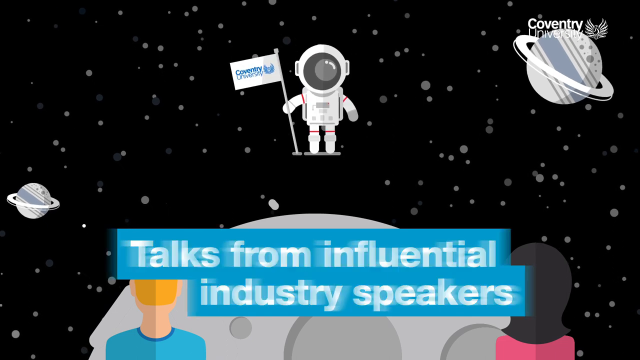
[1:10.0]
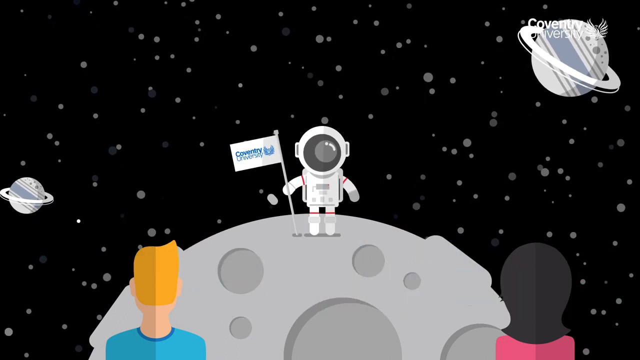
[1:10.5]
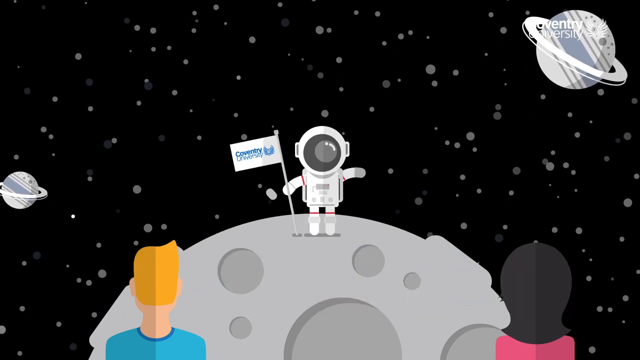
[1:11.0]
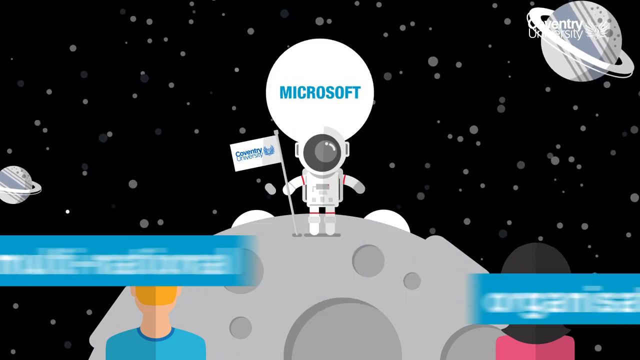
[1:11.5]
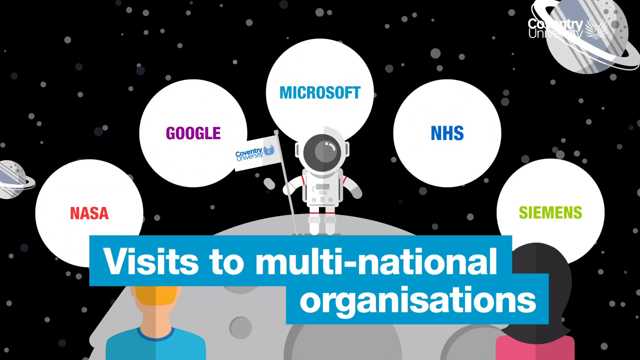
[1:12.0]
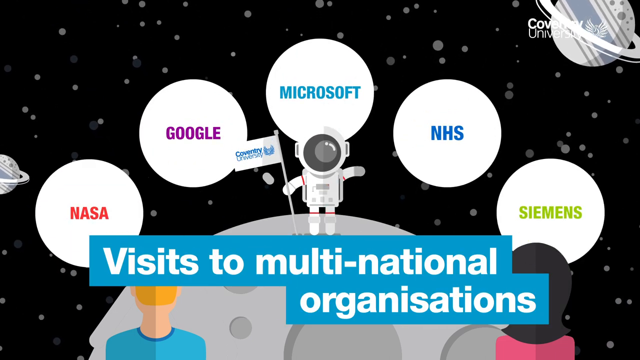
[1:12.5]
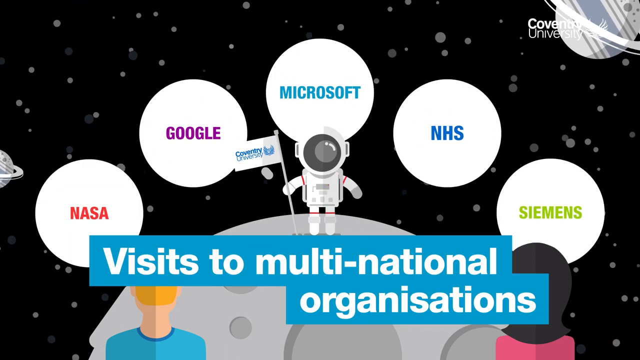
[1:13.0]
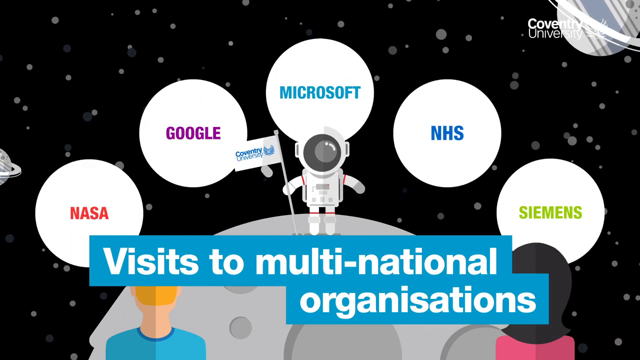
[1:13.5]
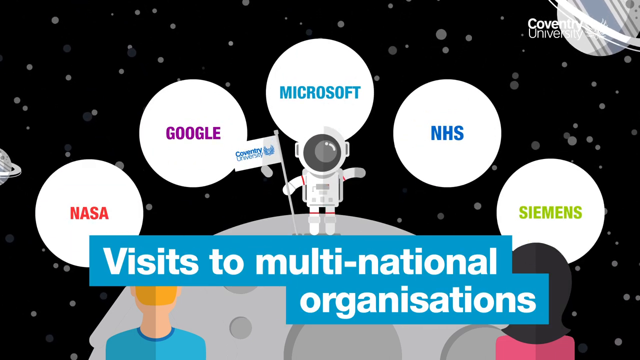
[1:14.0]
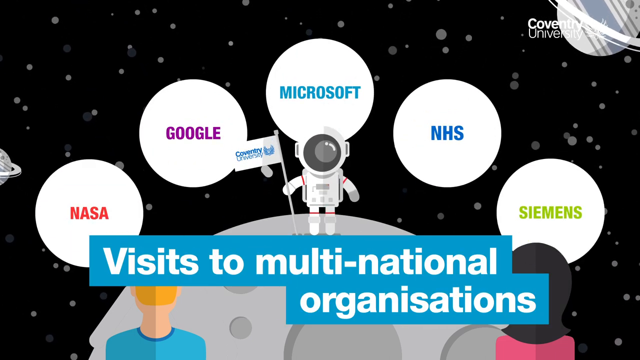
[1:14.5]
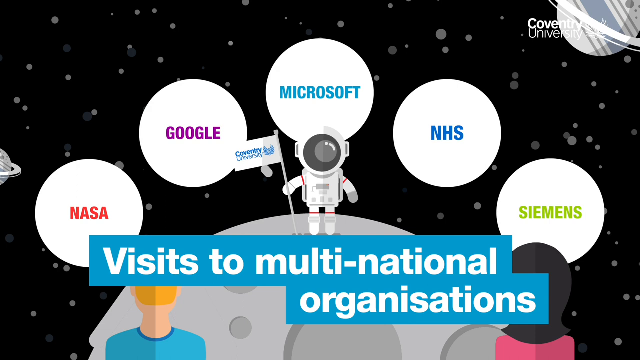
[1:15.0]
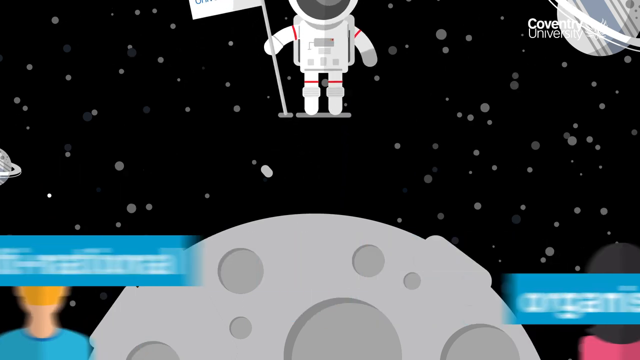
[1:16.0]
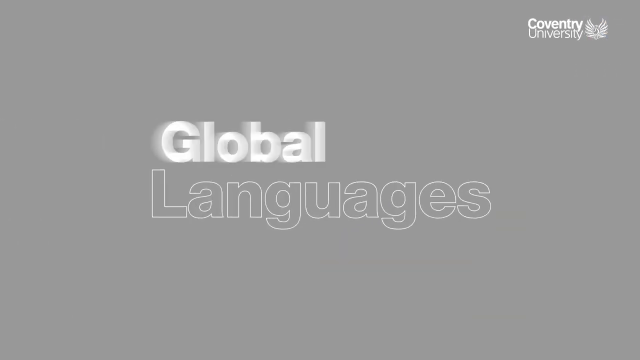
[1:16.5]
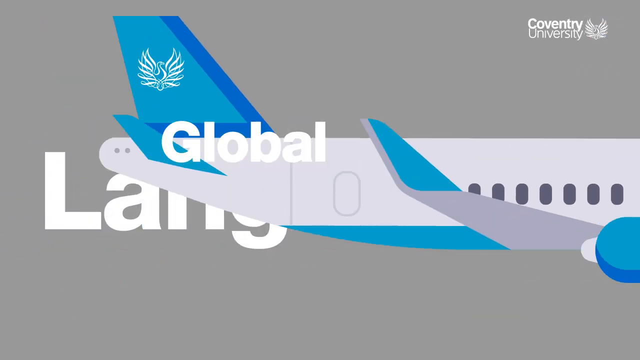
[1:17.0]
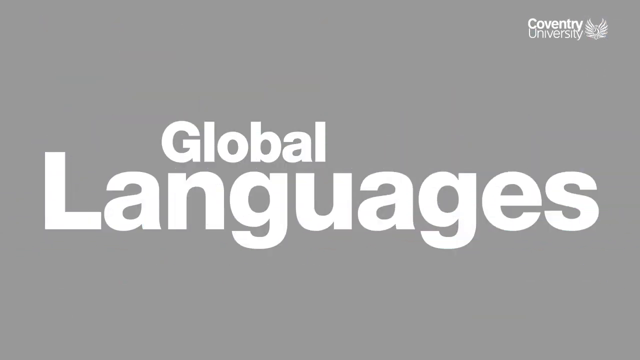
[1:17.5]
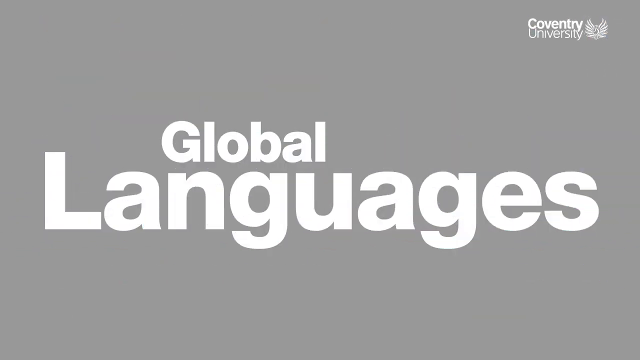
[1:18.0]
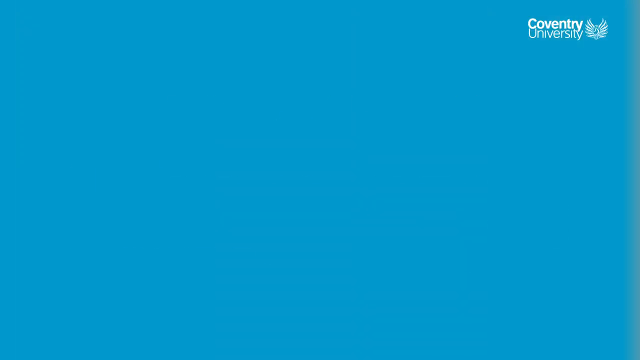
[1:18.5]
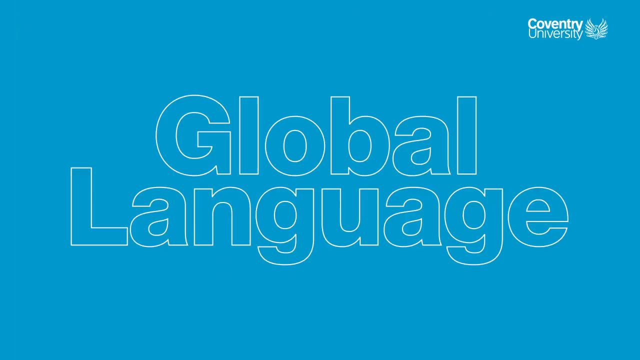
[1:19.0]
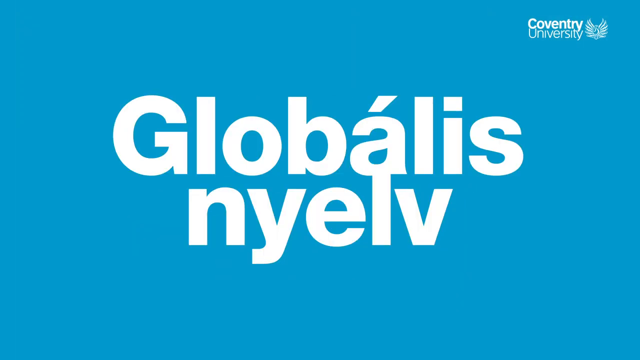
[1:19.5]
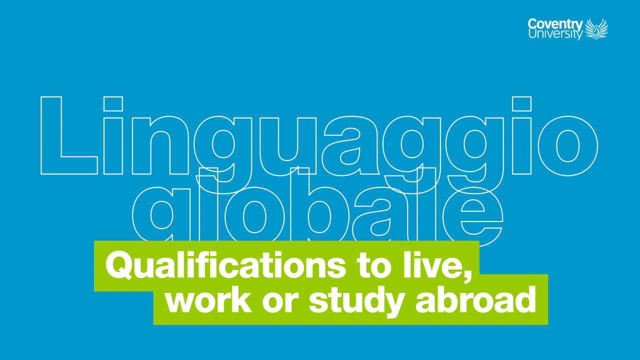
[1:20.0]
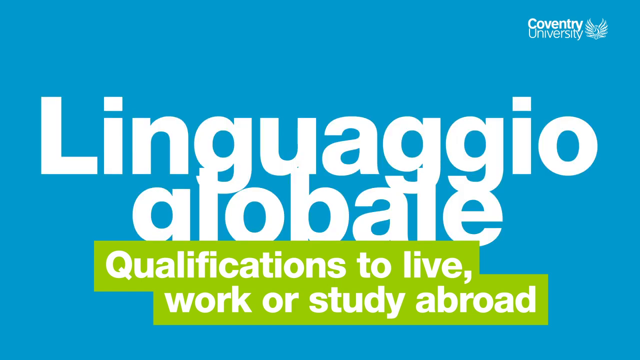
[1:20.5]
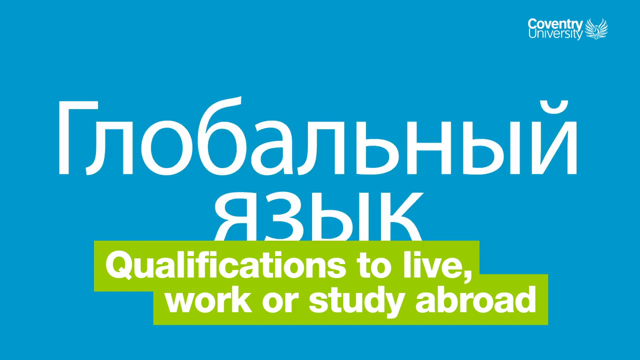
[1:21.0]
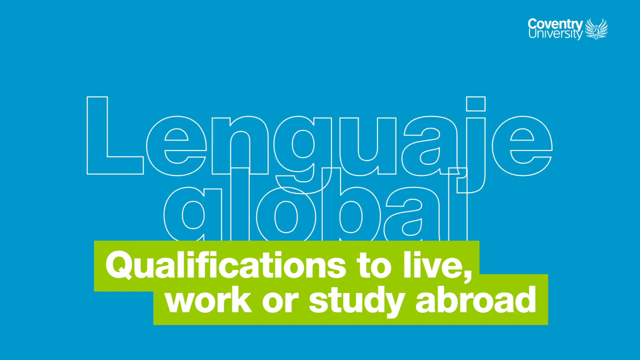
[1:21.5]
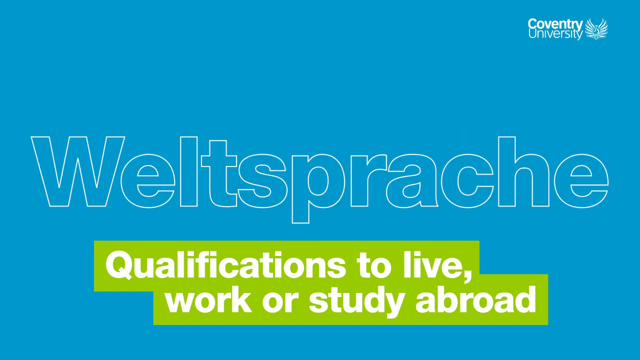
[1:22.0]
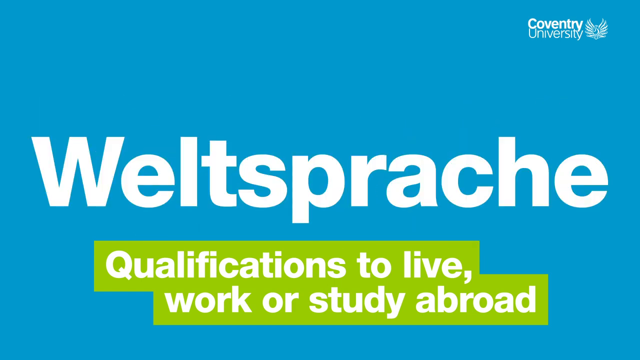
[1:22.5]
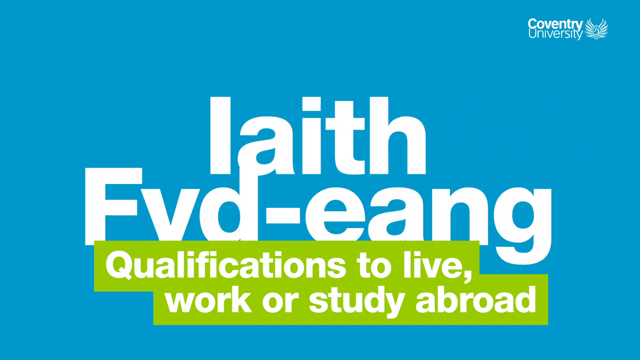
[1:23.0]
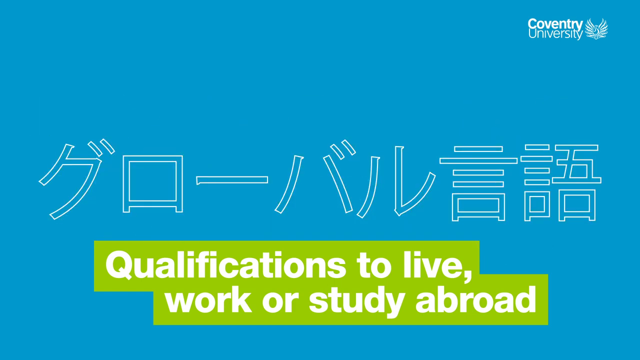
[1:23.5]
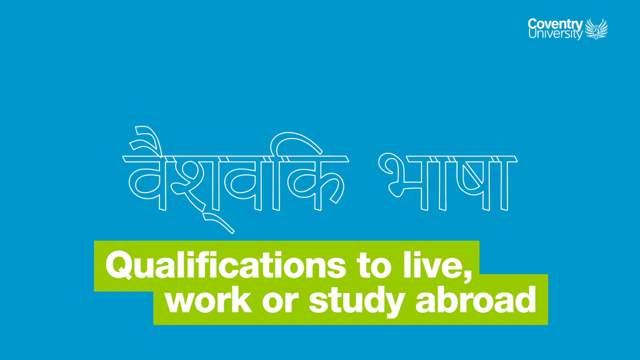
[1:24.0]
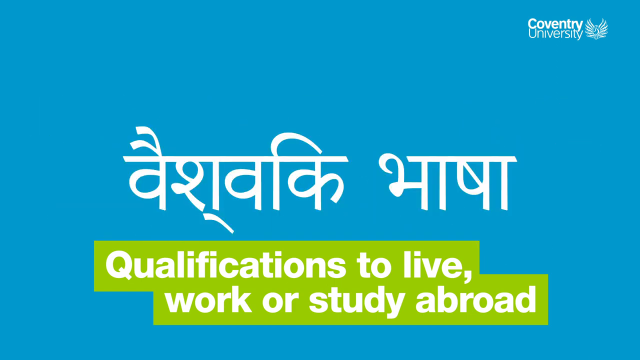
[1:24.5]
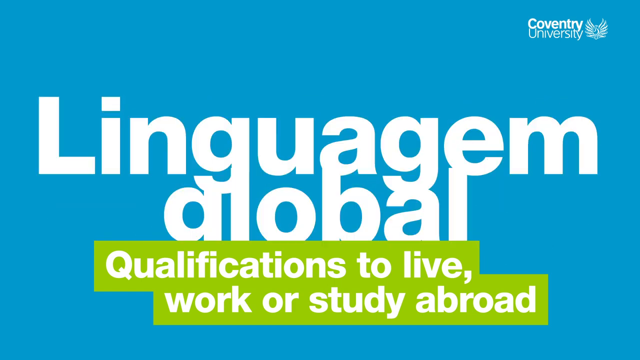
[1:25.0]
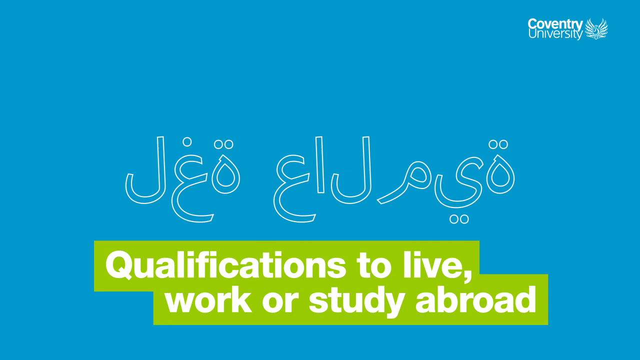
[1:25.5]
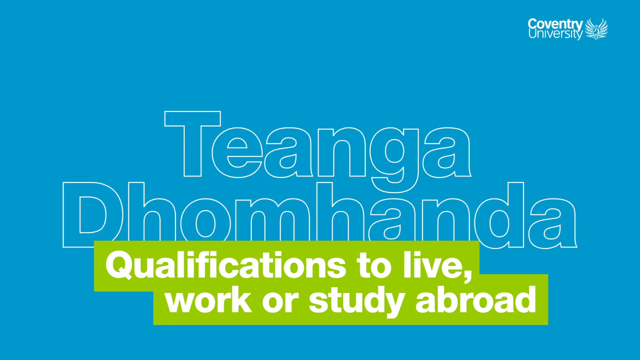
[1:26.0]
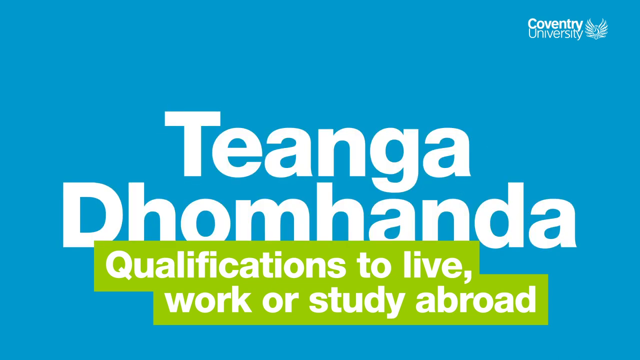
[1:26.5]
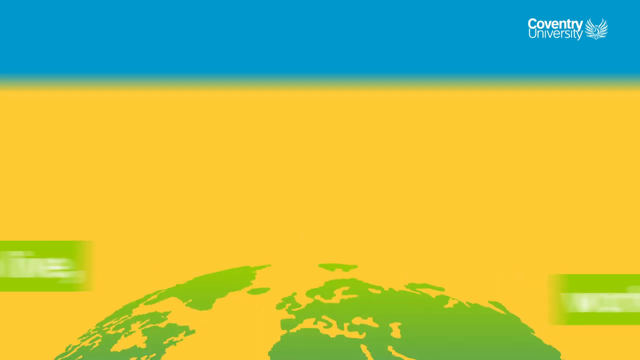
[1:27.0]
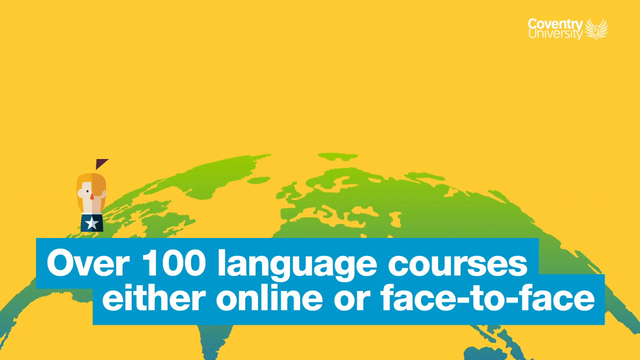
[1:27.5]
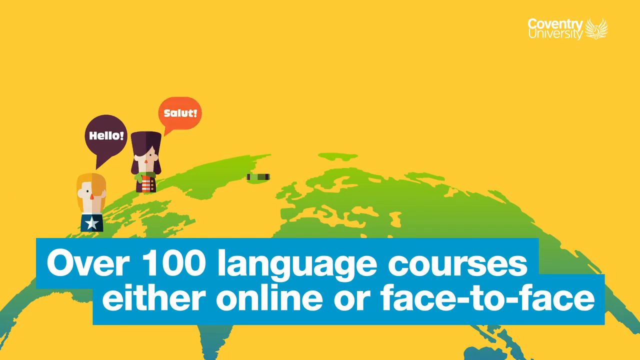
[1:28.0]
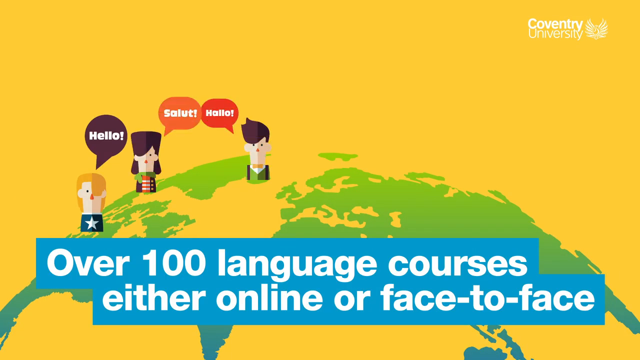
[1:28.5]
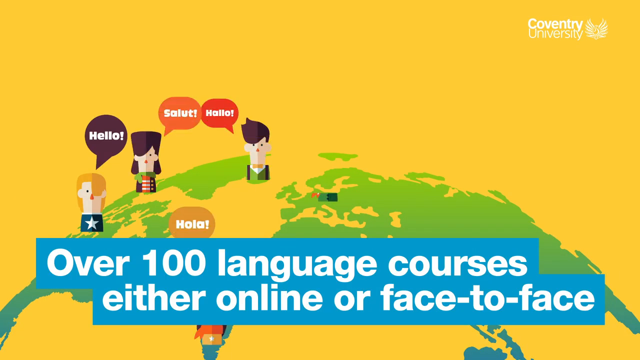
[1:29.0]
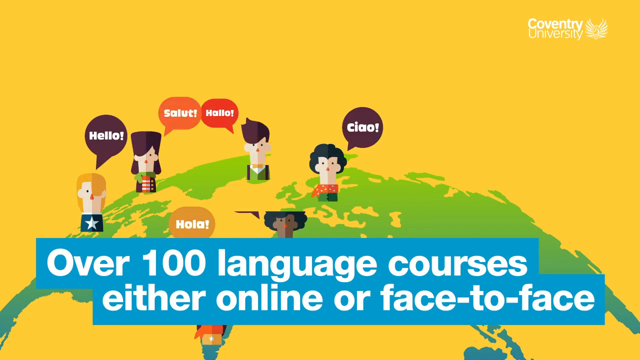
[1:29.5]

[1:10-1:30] A black screen has gray dots throughout and a gray and white planet. In the middle of the page is an astronaut holding a white flag. At the bottom of the page, bold white lettering on a blue background reads "talks from influential industry speakers." There is also a crater on the page. The astronaut drops down on top of the crater, and different words pop out of it: NASA, Google, Microsoft, NHS and Siemens, along with the text "visits to multinational organizations." The astronaut disappears. The next screen is a gray page with bold white letters that say "global languages." A large white airplane with blue wings comes through the middle of the page. The screen then turns blue, showing "global languages" and other languages. At the bottom of this blue screen, bold white lettering on a blue background reads "qualifications to live, work or study abroad," and different languages pop up on the page in white lettering.